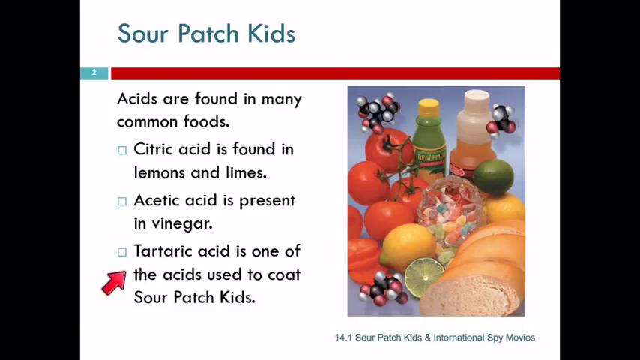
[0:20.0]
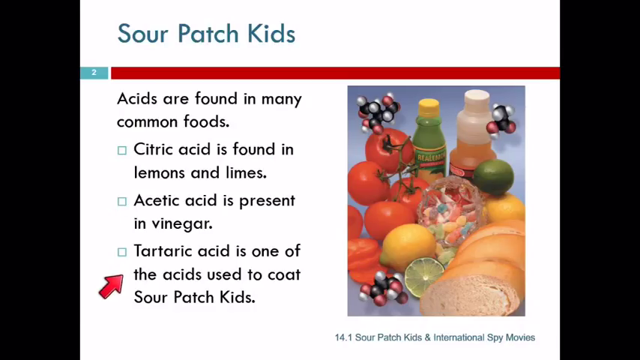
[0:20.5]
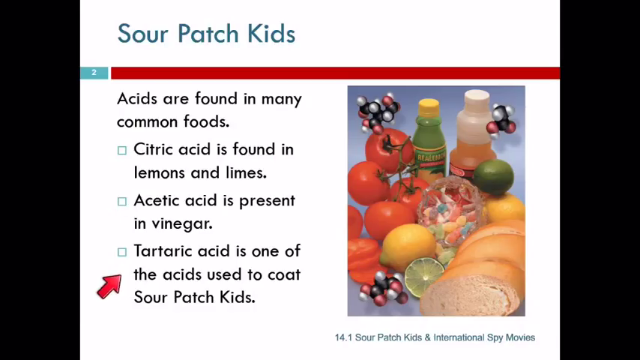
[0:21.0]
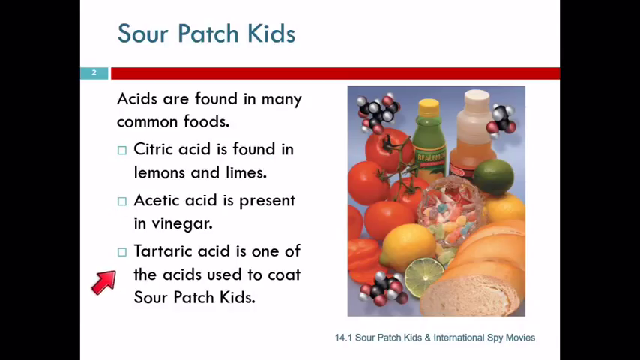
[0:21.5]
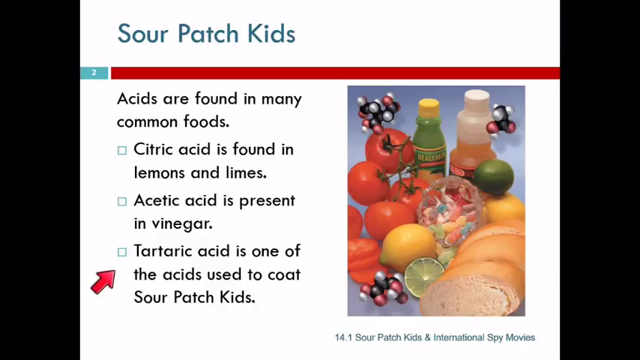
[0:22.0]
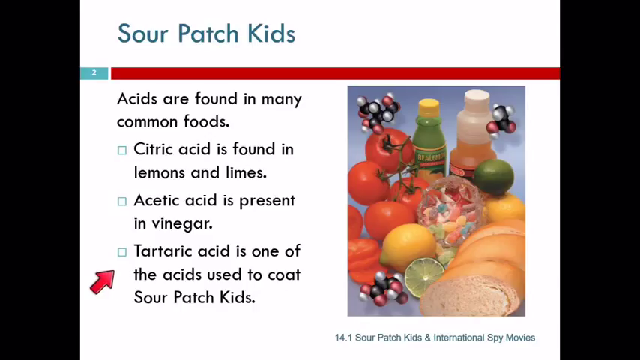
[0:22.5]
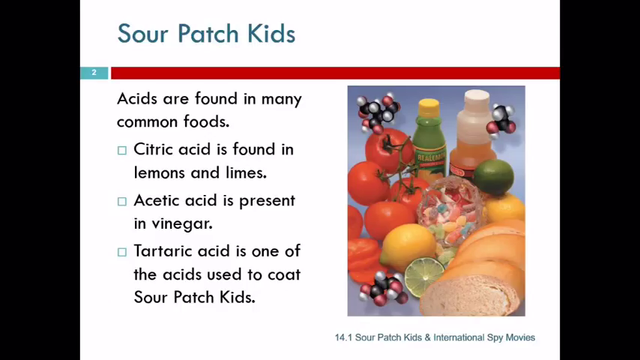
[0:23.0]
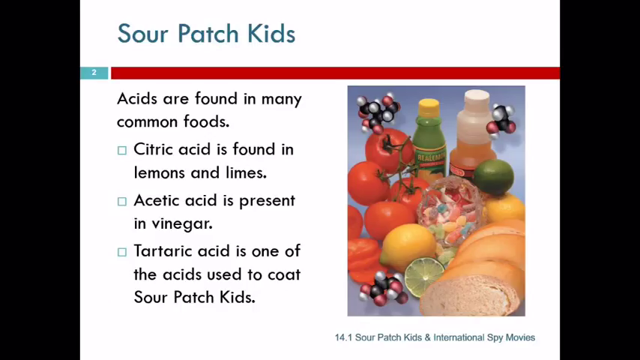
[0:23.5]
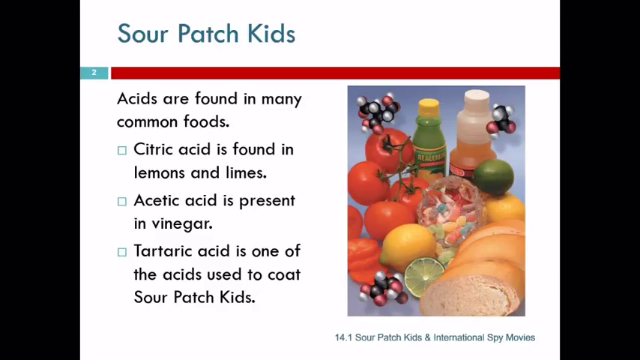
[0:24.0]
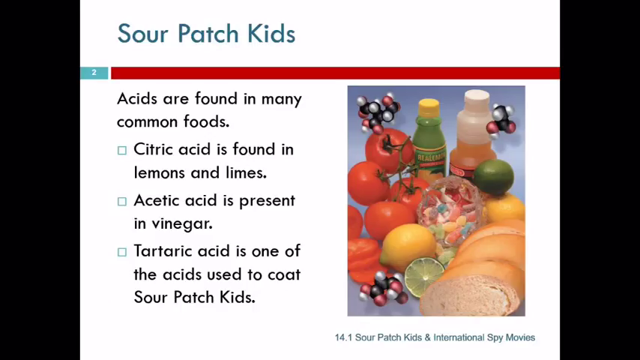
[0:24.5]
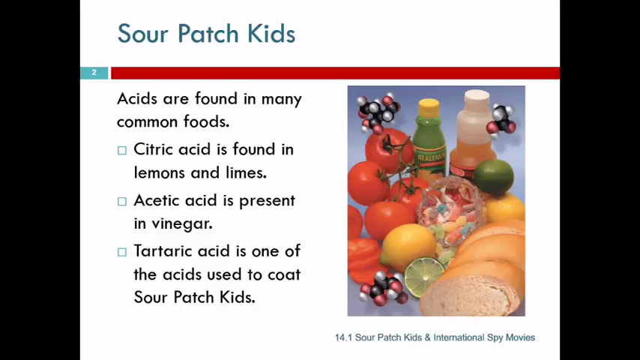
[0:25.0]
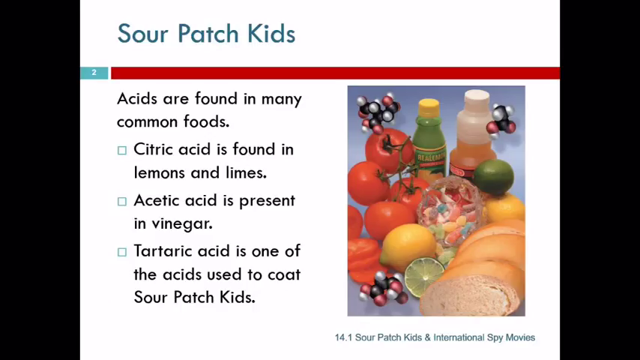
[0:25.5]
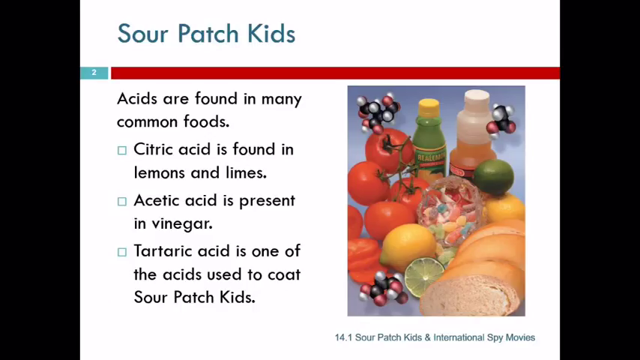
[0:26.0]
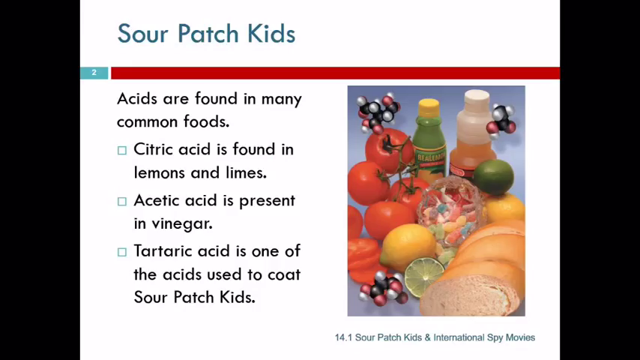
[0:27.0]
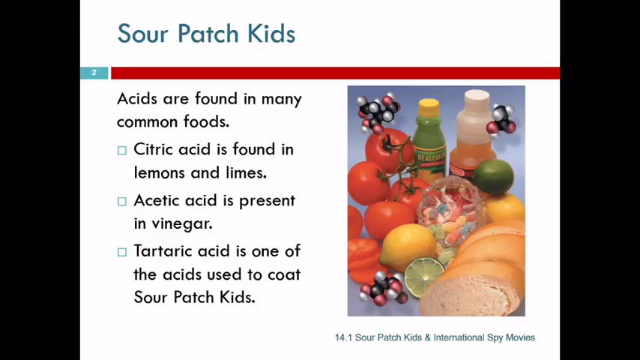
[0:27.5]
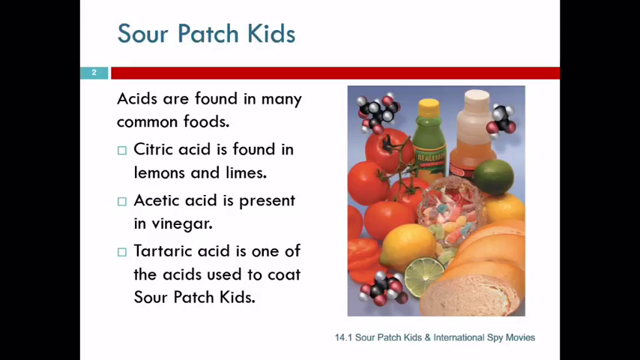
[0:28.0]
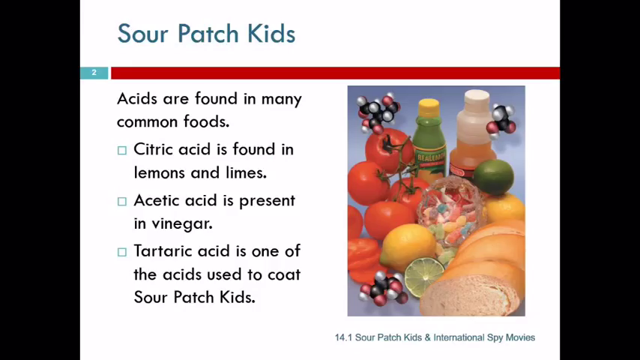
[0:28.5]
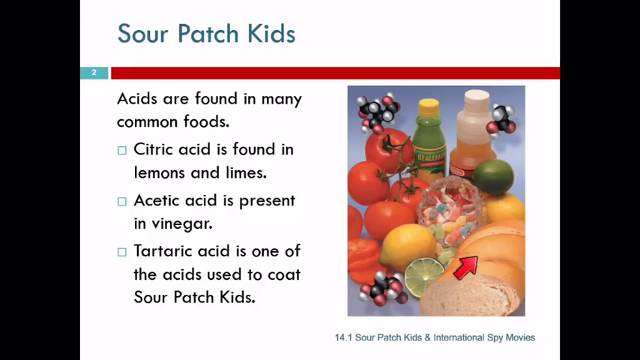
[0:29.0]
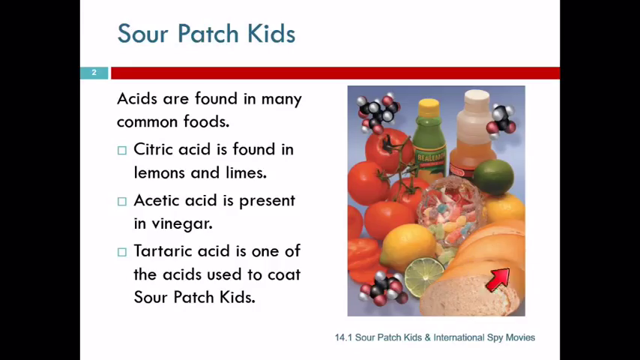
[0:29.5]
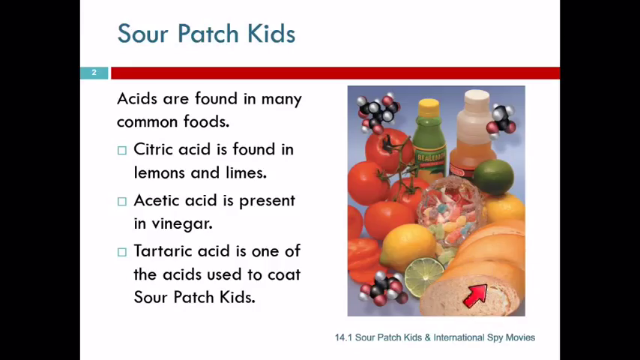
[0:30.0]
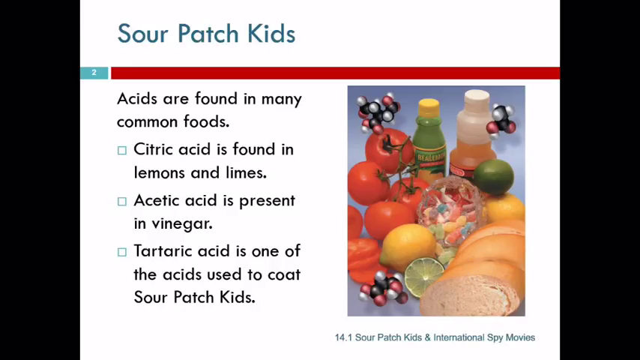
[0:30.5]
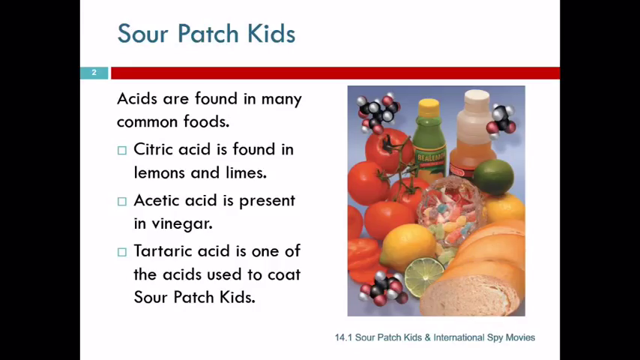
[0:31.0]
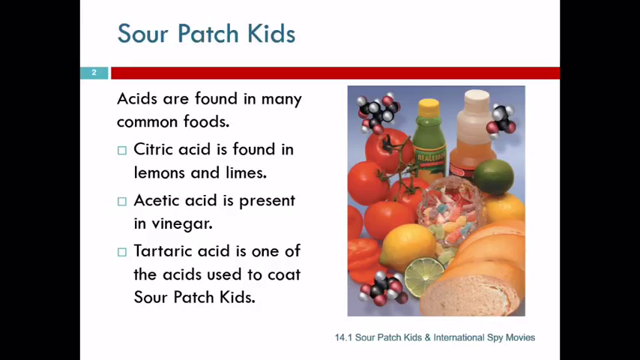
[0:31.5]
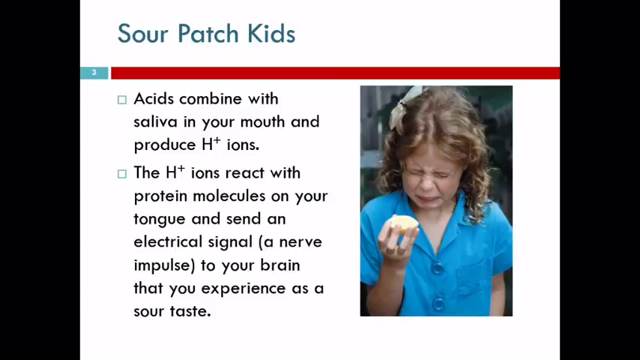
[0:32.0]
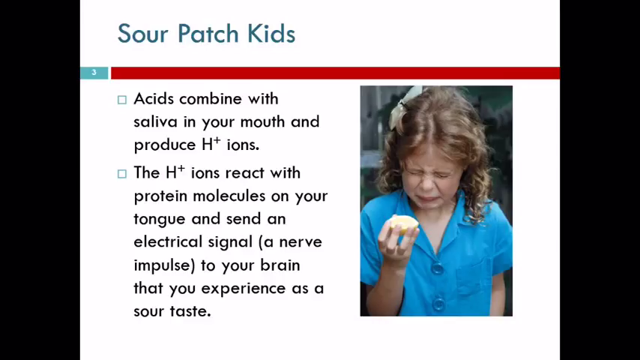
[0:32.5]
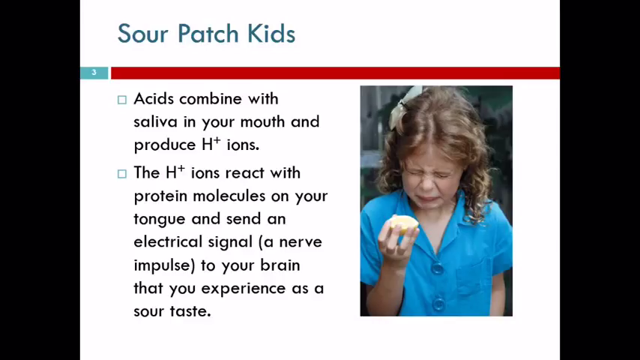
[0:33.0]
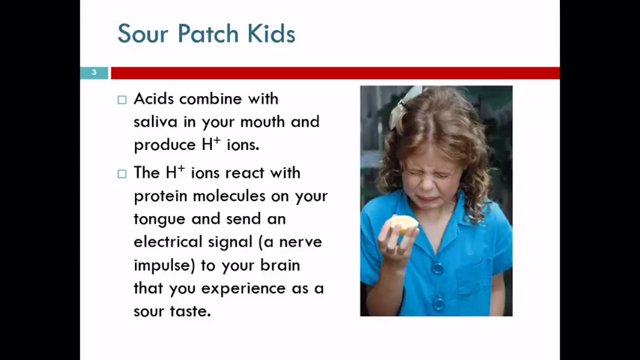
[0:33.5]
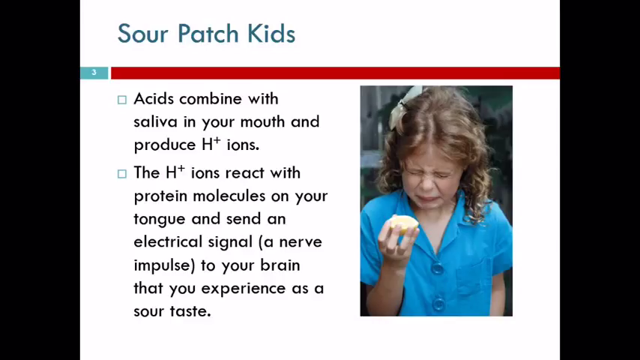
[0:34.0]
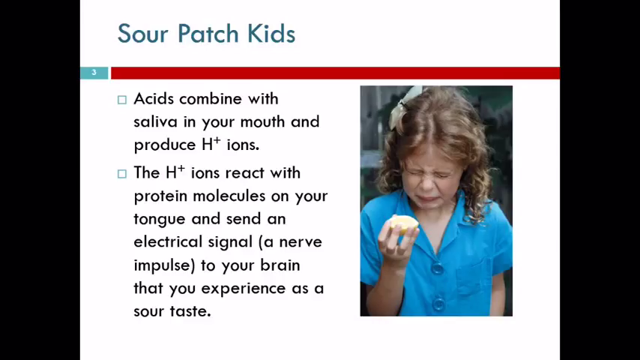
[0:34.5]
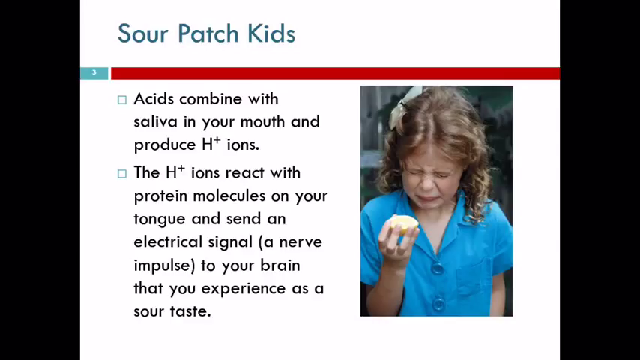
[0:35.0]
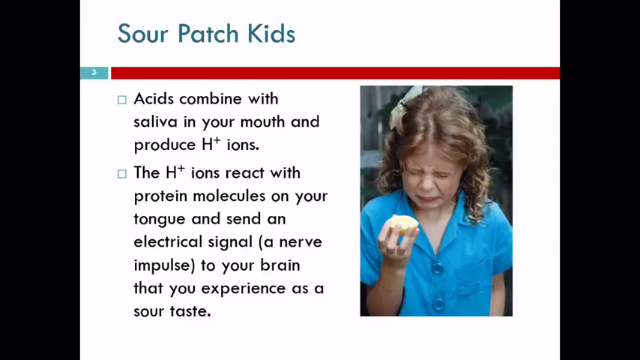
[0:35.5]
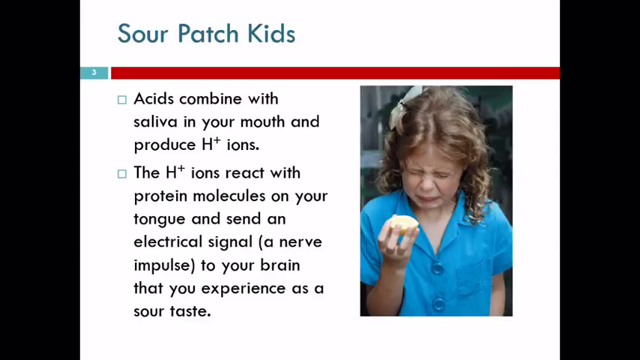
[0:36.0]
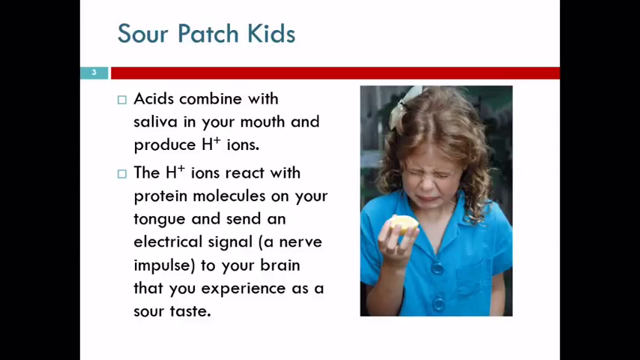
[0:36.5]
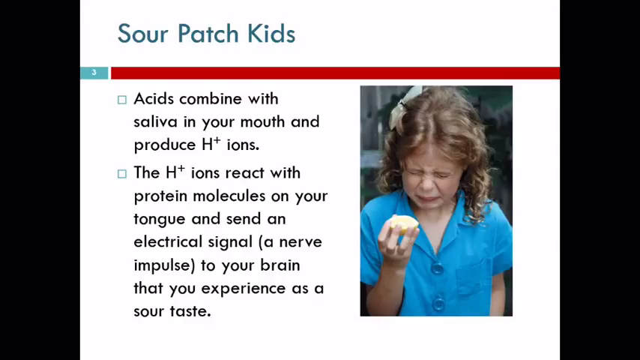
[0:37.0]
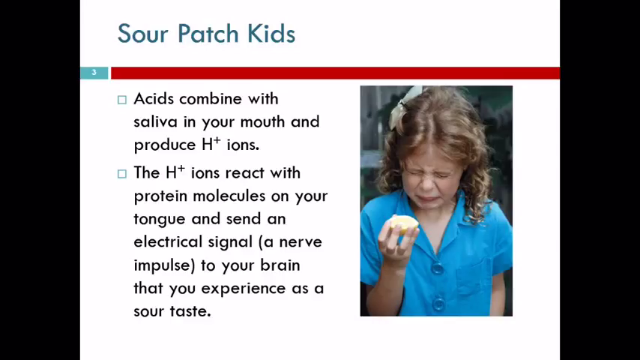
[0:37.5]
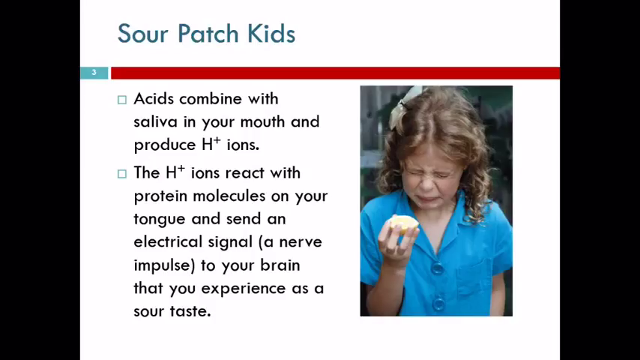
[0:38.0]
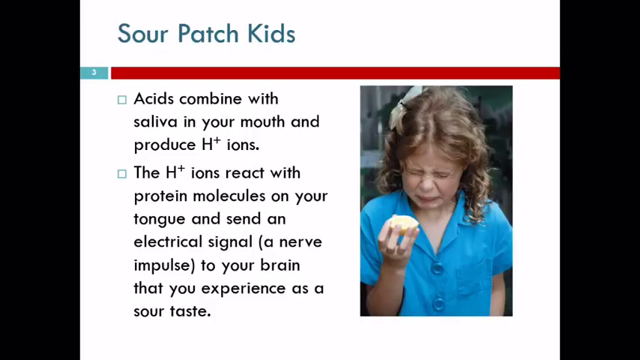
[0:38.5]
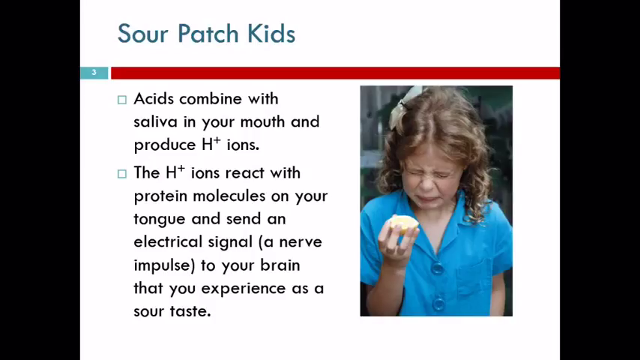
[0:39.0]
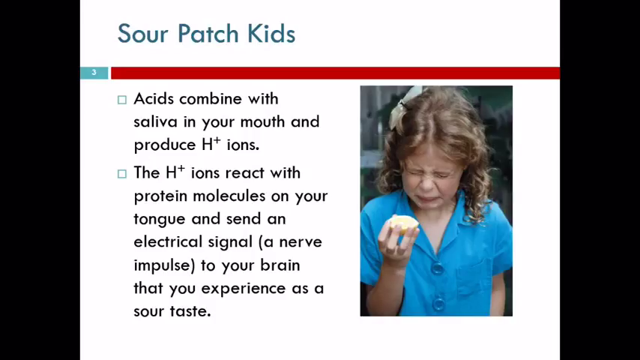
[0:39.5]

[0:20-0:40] A red arrow hovers over and clicks on the written content, then hovers in the right corner. An image shows a young child wearing a blue dress, holding something in the air in her right hand, with a frown as if she is crying; she has a white ribbon in her hair. The background of the image is a bit blurry. On the left side is written "acids combine with saliva in your mouth and produce h+ ions," and next to it "the h+ ions react with protein molecules on your tongue and send an electrical signal." The view then goes to another page, where the red arrow continues hovering, moves to the left side, and then clicks on the bread.